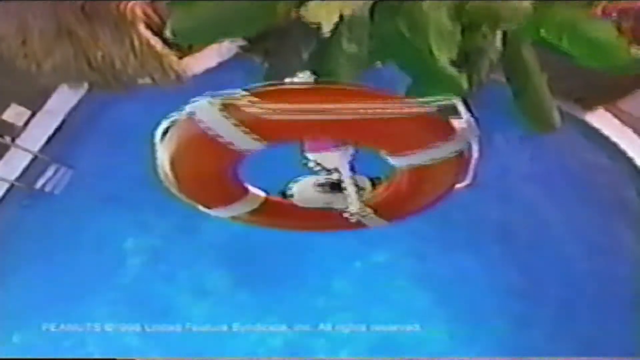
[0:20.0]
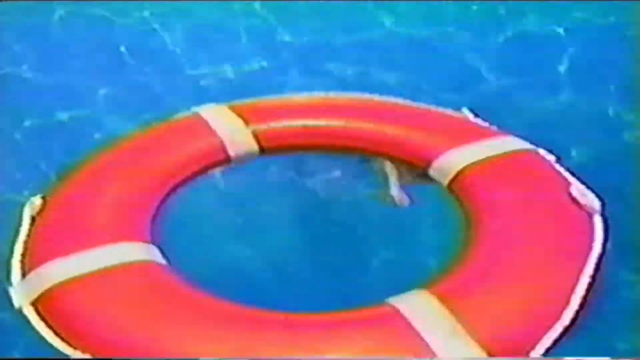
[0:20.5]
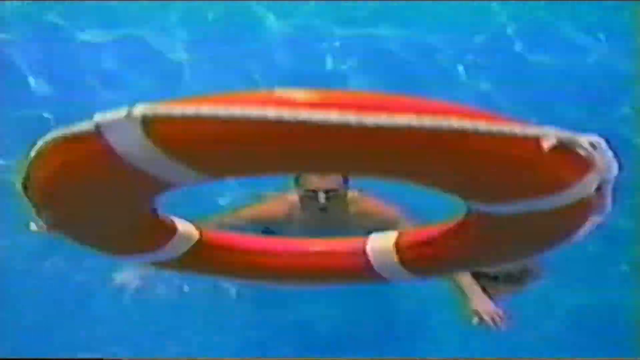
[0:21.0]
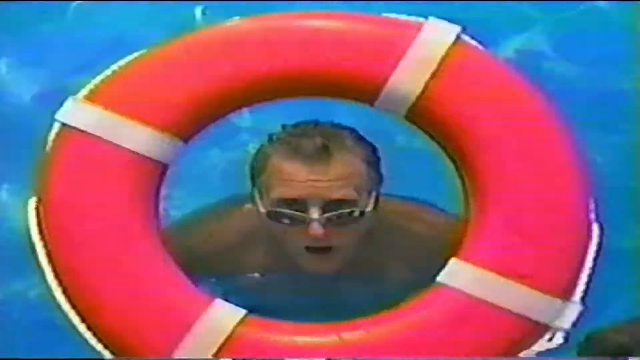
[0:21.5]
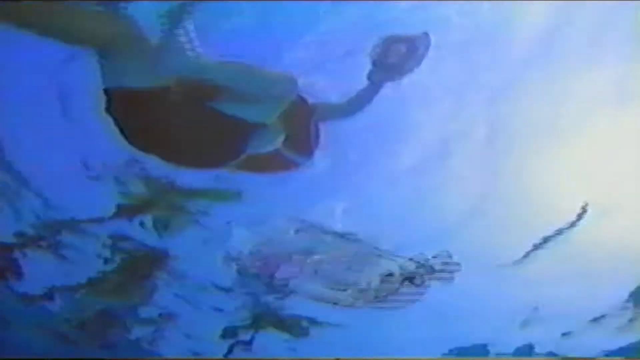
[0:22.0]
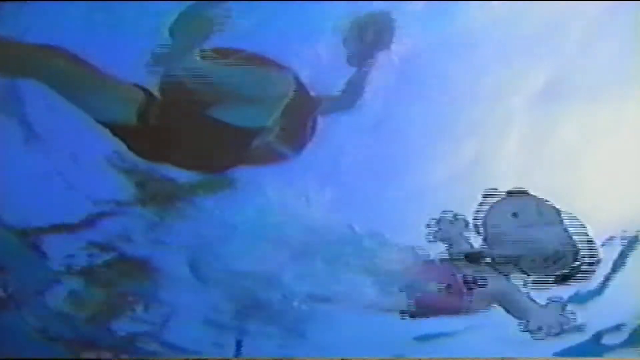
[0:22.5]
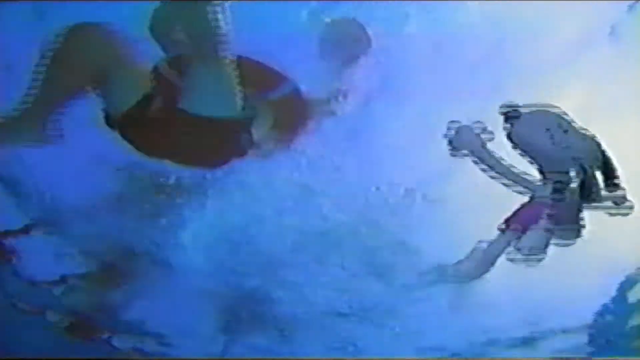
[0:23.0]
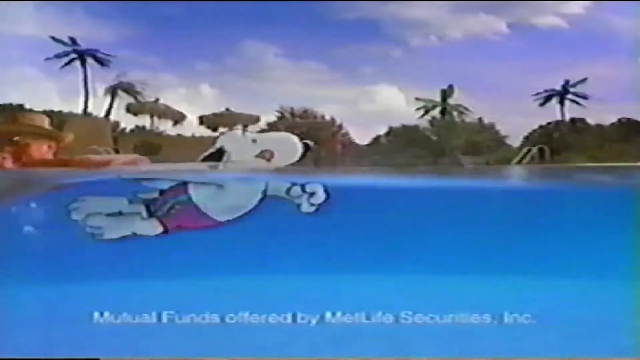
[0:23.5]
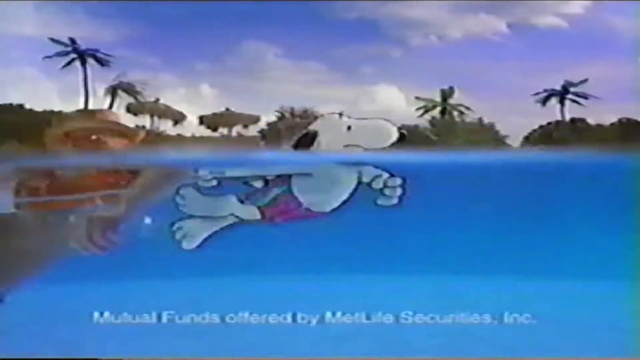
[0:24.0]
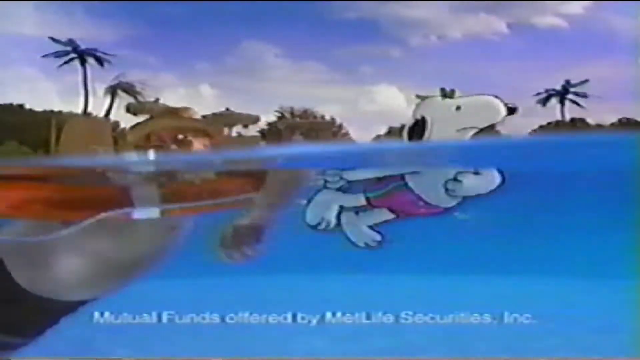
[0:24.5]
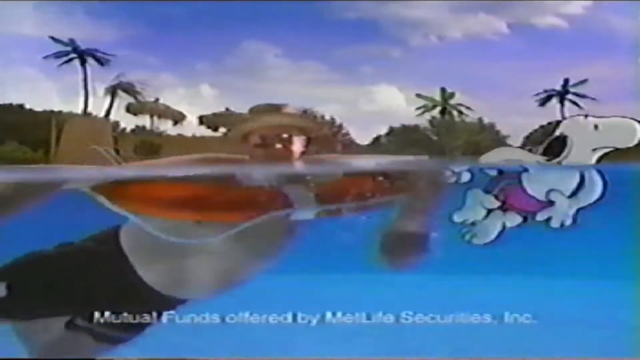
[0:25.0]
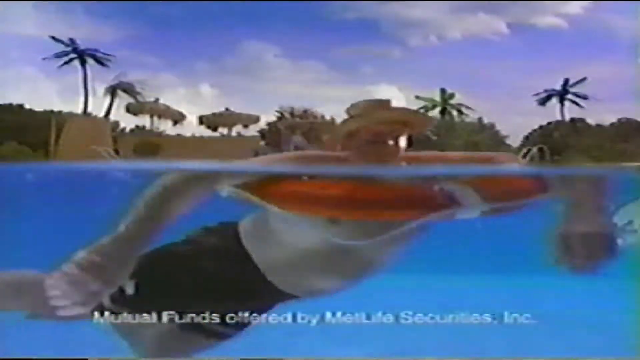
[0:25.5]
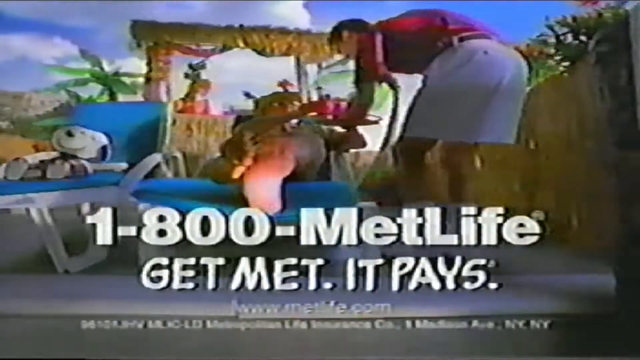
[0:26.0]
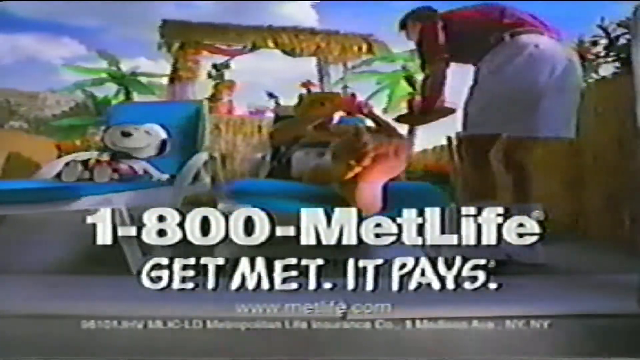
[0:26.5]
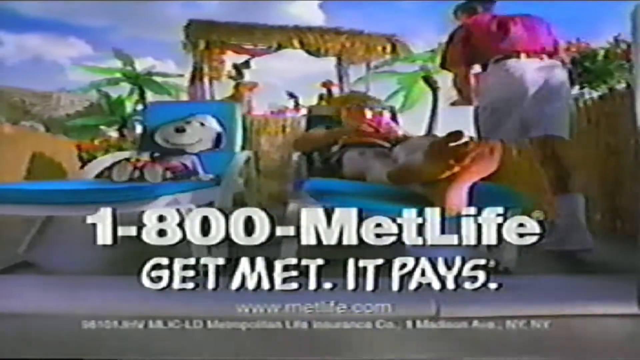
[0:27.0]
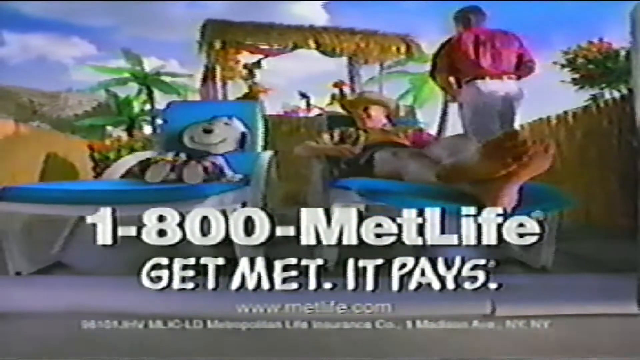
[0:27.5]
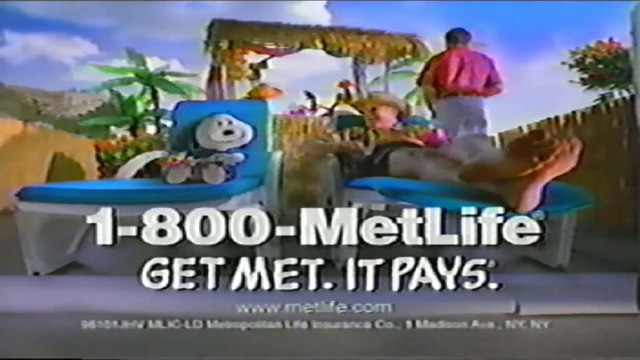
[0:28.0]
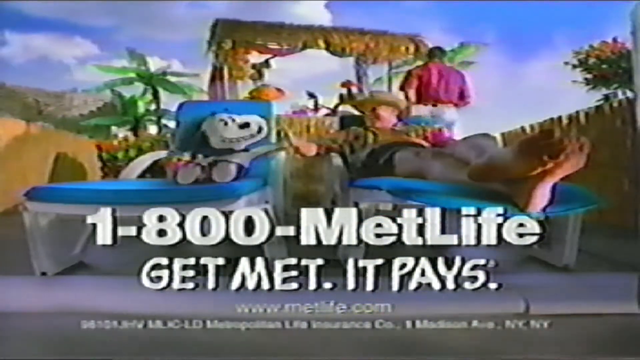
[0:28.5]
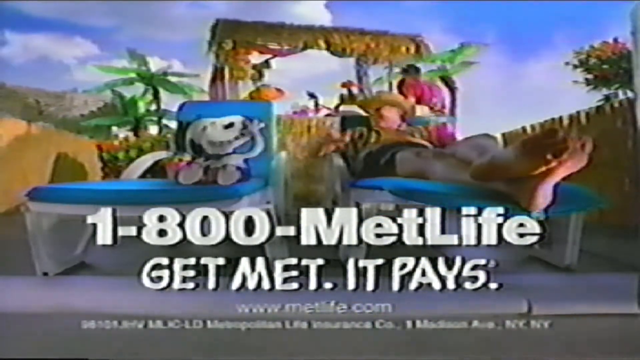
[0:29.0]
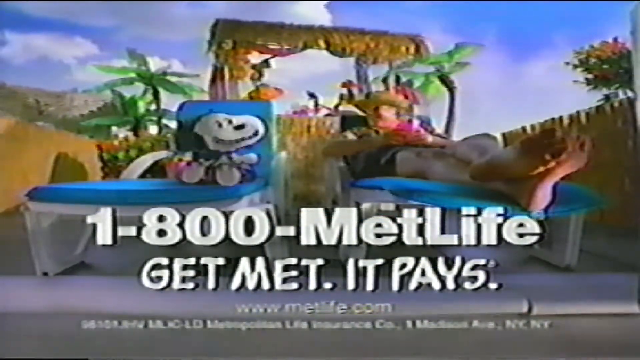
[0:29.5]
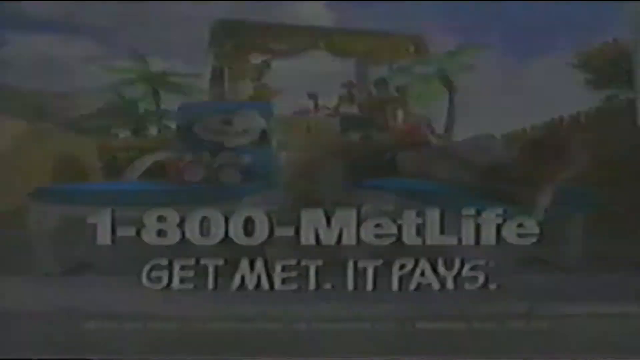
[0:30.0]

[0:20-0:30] Snoopy is launched through the air and goes through a red and white lifesaver ring, which lands on the drowning man. The camera angle changes to show both characters in the water, and Snoopy tugs the man away to safety. The scene then changes to Snoopy and the man lounging on what seem to be reclining pool chairs or pool beds, both enjoying a drink served by an employee, a man wearing bright white shorts and a bright pink collared shirt. The employee holds a tray with drinks and also appears to be wearing white shoes. Snoopy and the man lounge under what appears to be a cabana that holds the materials for making drinks. Text at the bottom of the screen reads "1-800-MET-LIFE. GET MET. IT PAYS." Snoopy and the man high-five each other.